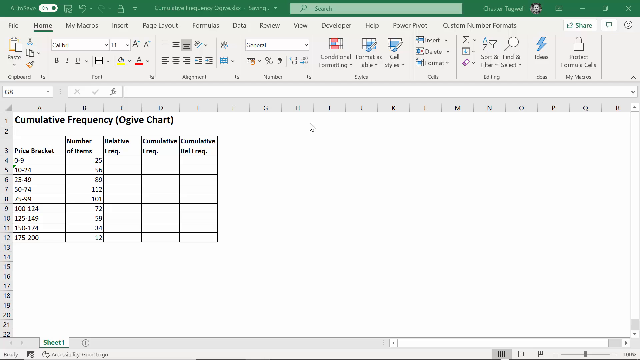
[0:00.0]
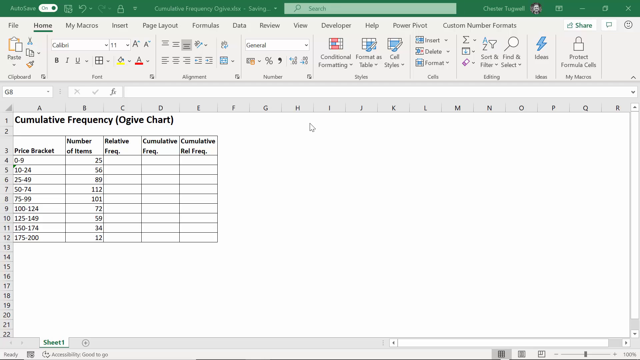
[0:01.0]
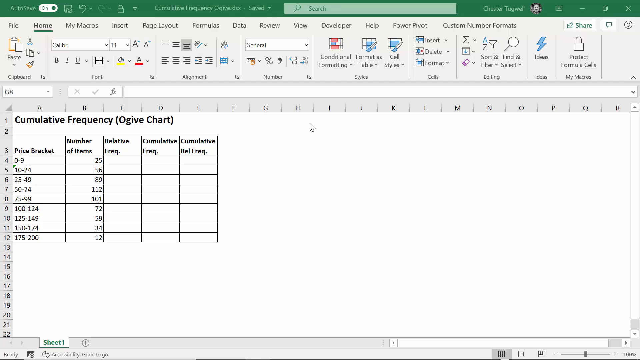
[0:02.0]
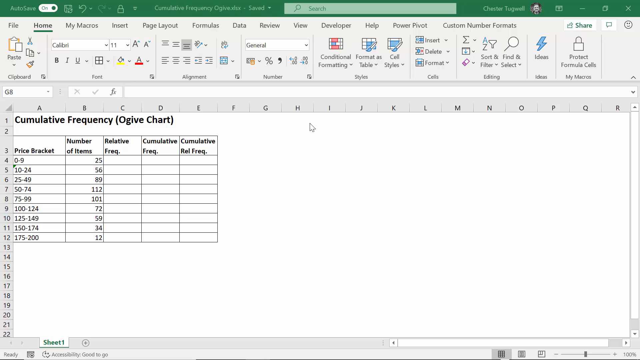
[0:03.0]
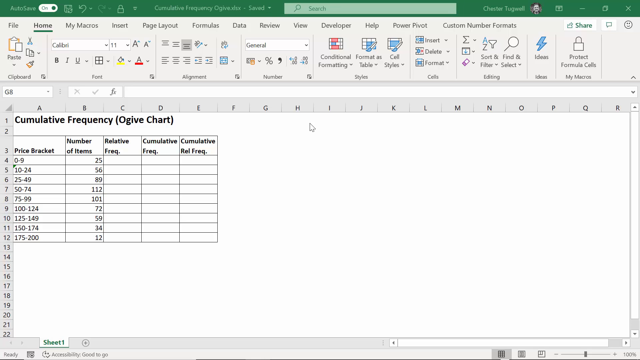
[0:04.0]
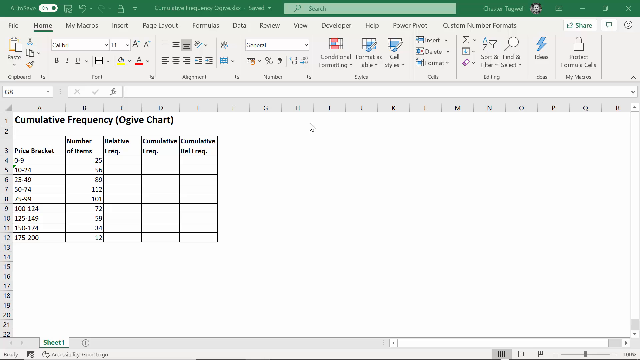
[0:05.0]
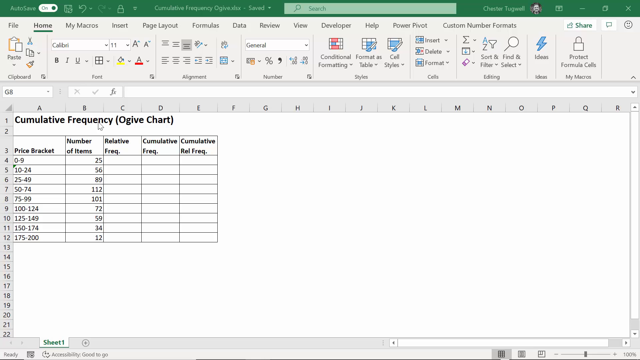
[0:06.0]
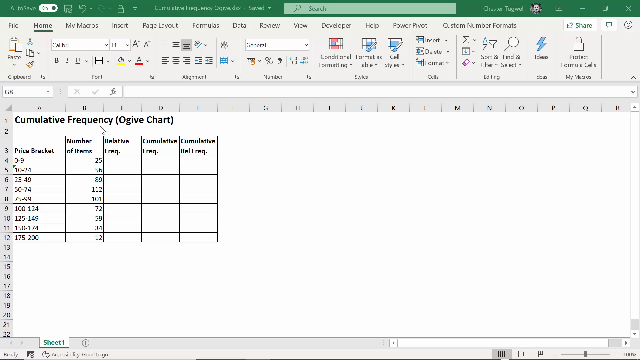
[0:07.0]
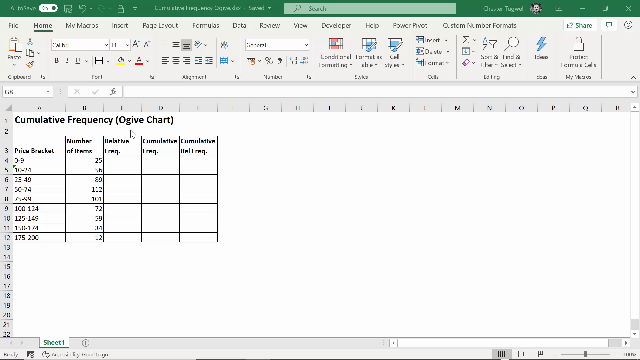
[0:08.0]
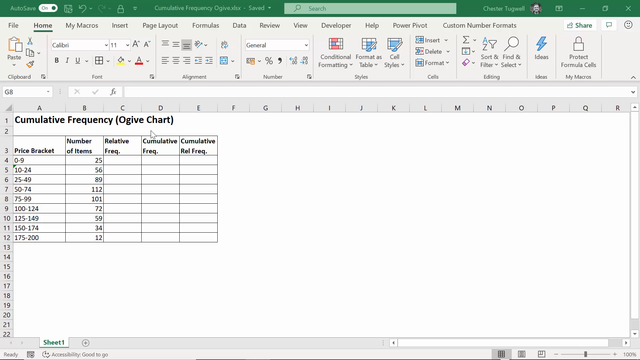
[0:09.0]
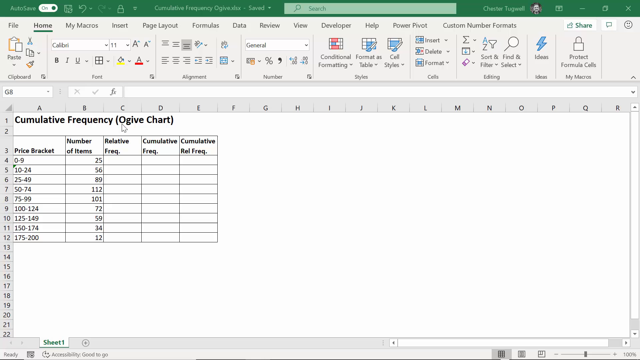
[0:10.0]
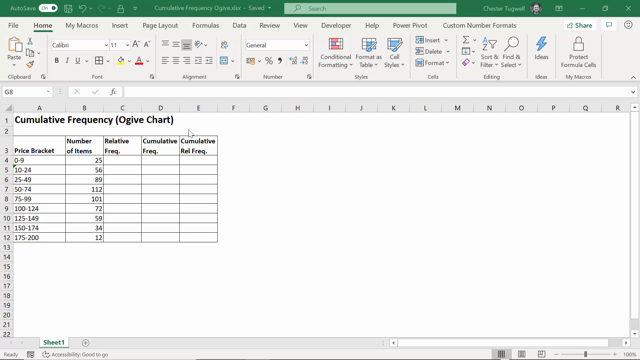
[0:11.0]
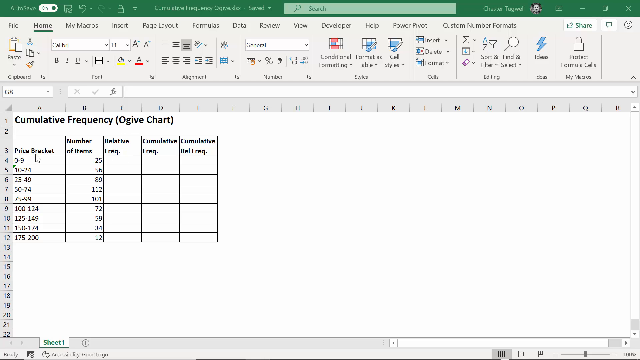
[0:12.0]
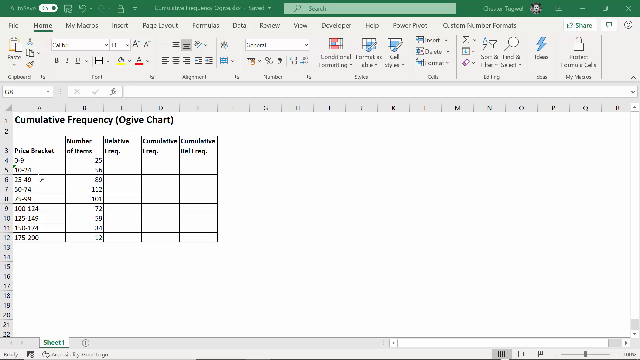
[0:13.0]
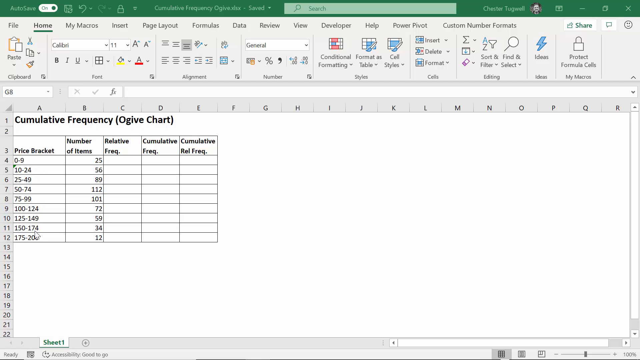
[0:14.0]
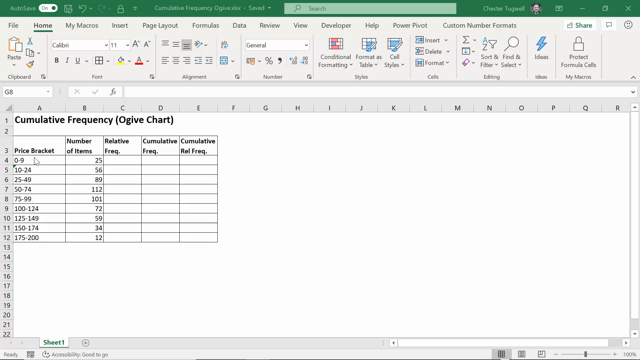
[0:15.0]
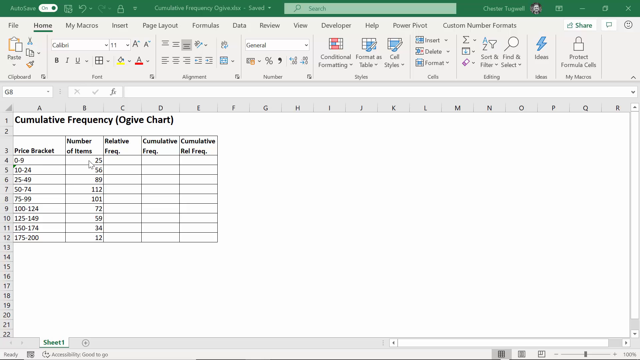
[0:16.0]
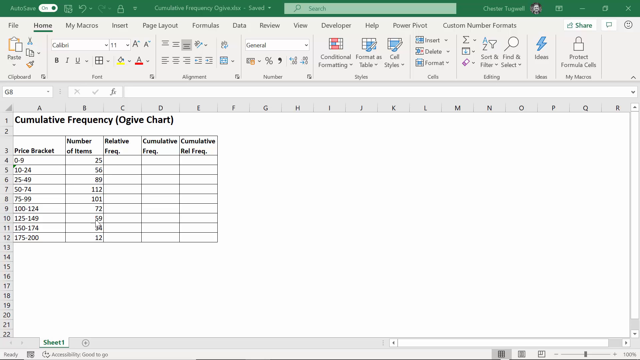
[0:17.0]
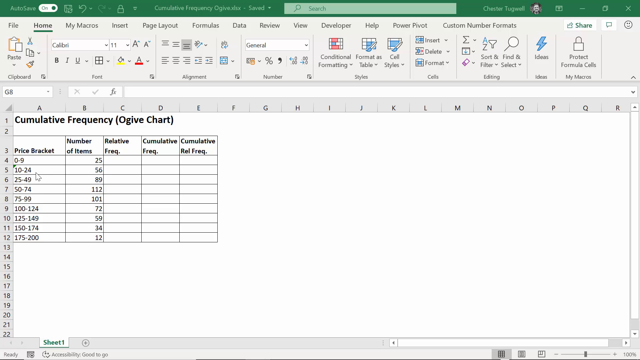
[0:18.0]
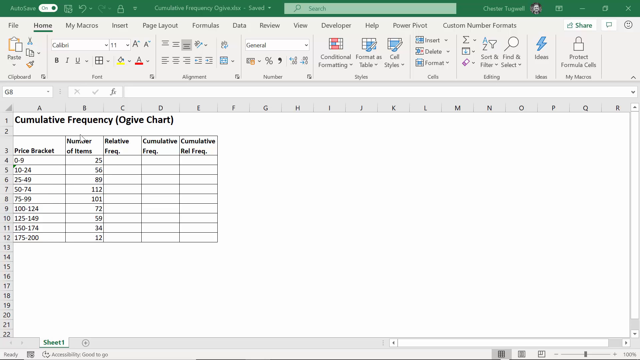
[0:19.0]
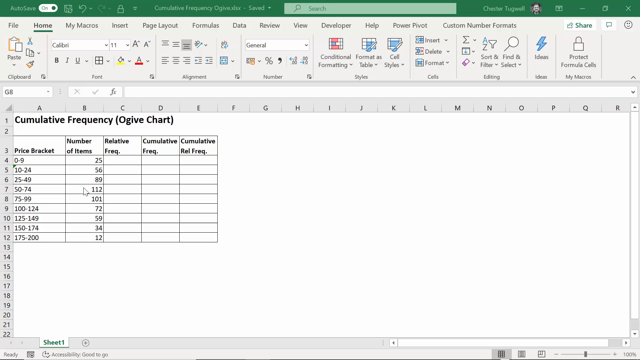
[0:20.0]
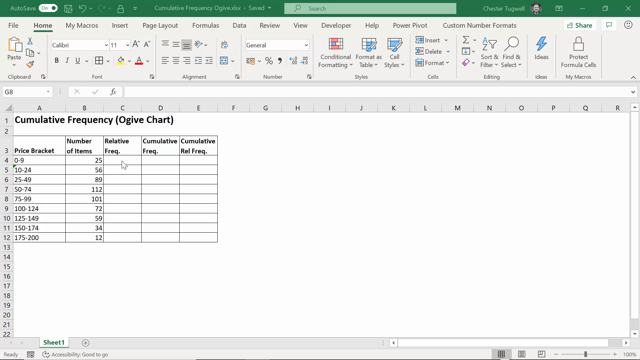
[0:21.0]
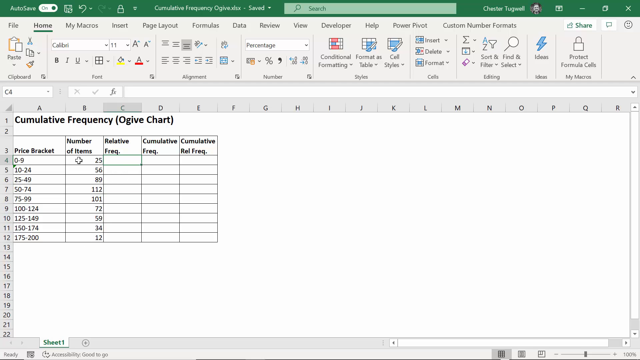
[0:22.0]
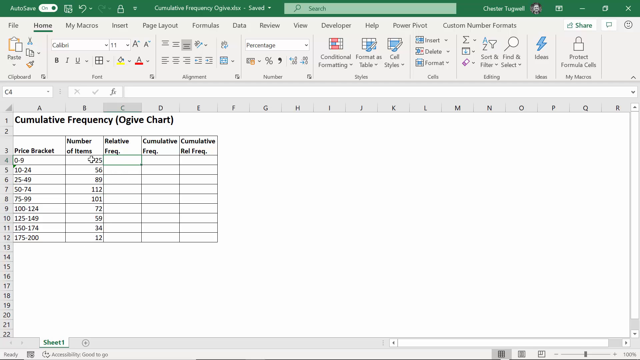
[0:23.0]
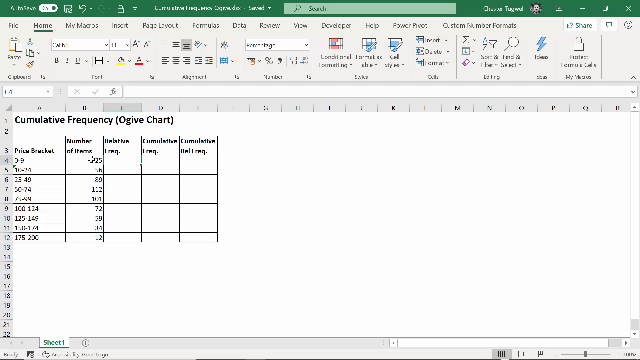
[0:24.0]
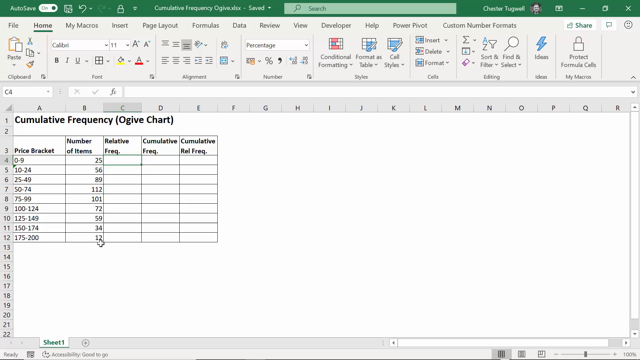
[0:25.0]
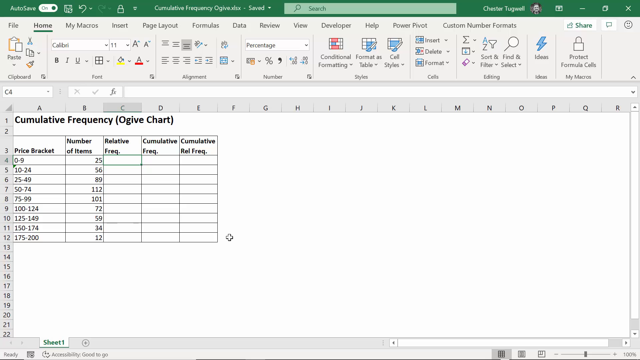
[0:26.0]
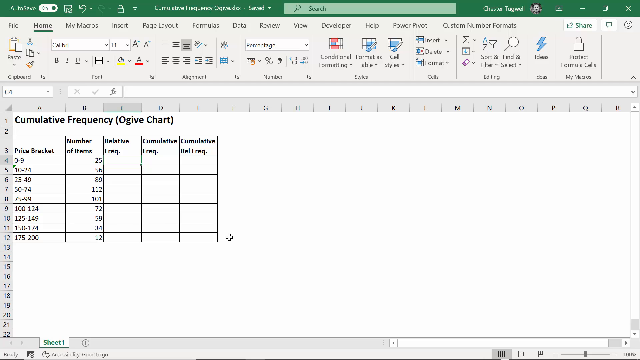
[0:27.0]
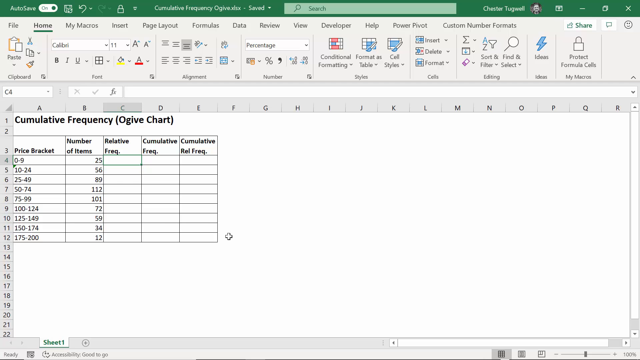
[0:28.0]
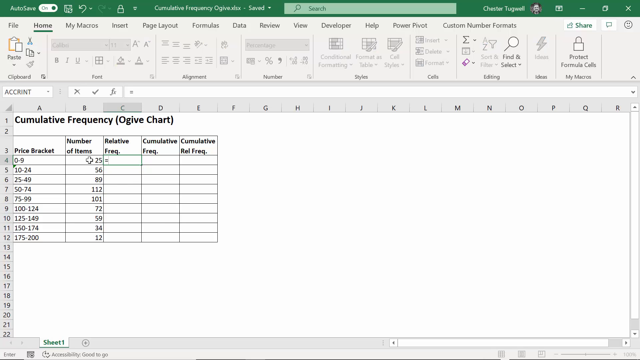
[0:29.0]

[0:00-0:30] An Excel sheet shows a cumulated frequency ogive chart with the price bracket, number of items, relative freq, cumulative freq and cumulative rel freq columns. There are approximately 10 price brackets, each with a different number of items. Only the first two columns, price bracket and number of items, contain information; the other three columns are empty. A mouse cursor moves around the chart. The user's name is at the top right, and an autosave icon set to on is in the top left corner.